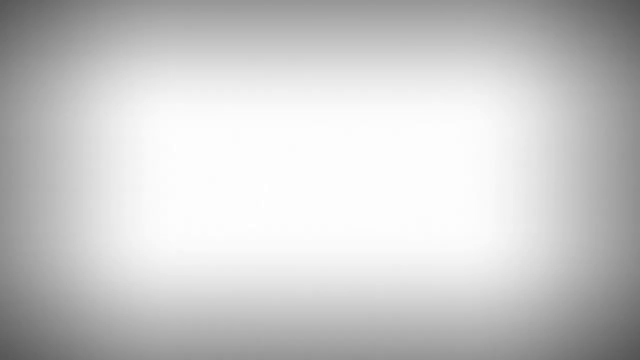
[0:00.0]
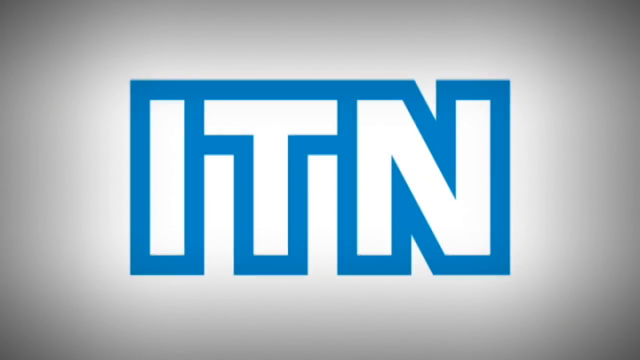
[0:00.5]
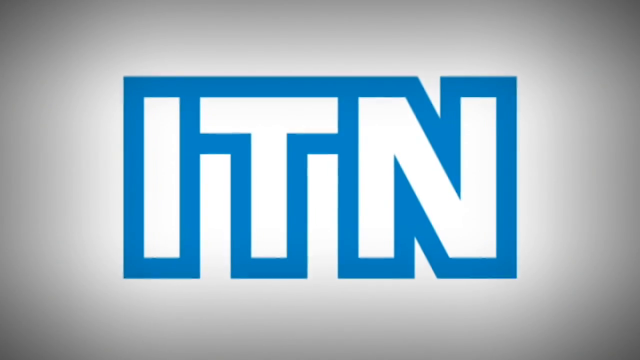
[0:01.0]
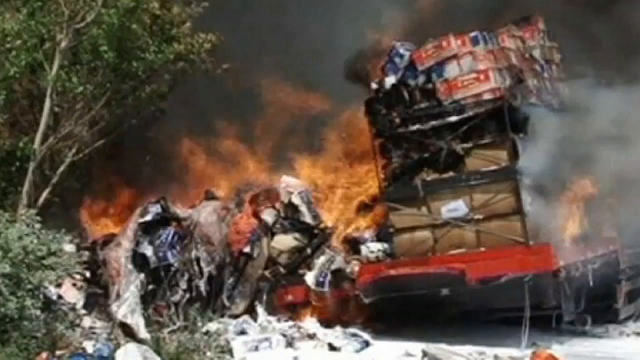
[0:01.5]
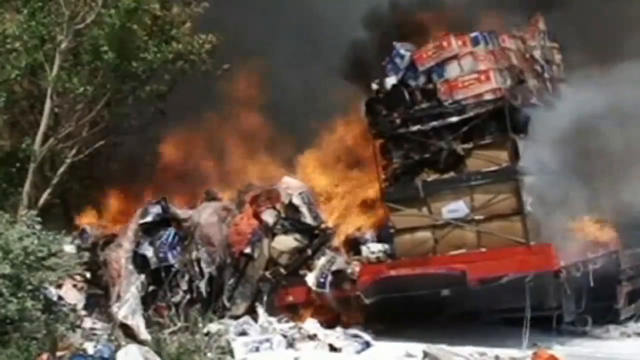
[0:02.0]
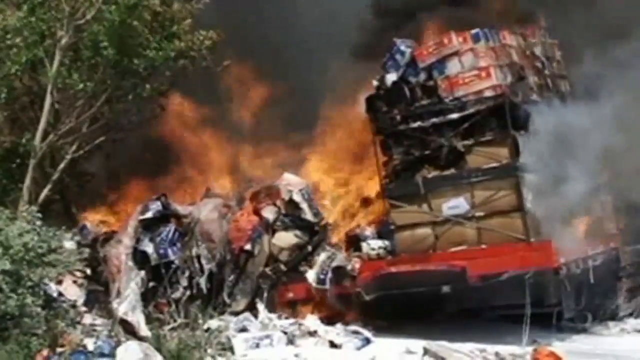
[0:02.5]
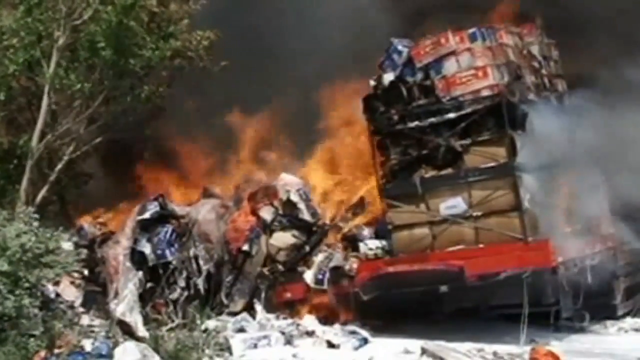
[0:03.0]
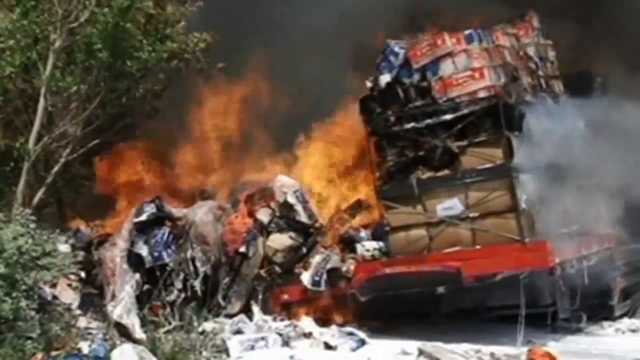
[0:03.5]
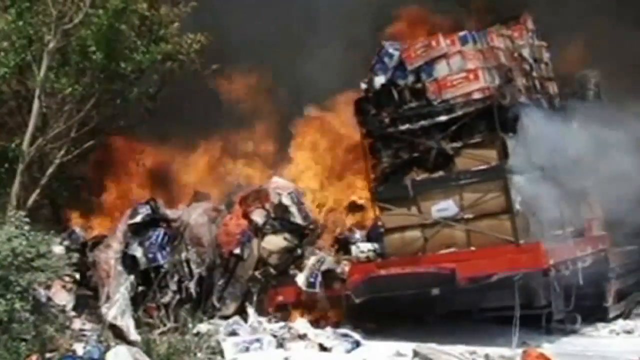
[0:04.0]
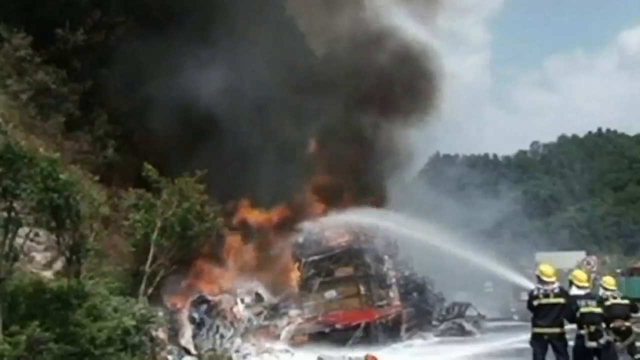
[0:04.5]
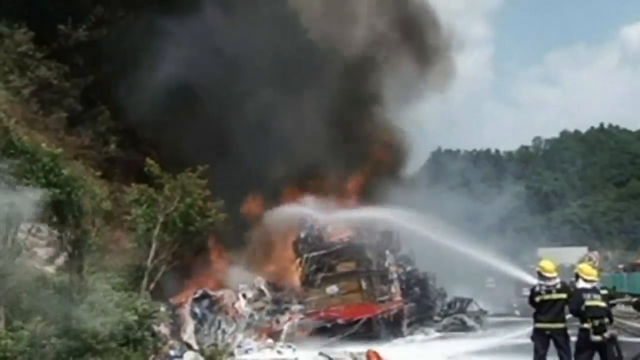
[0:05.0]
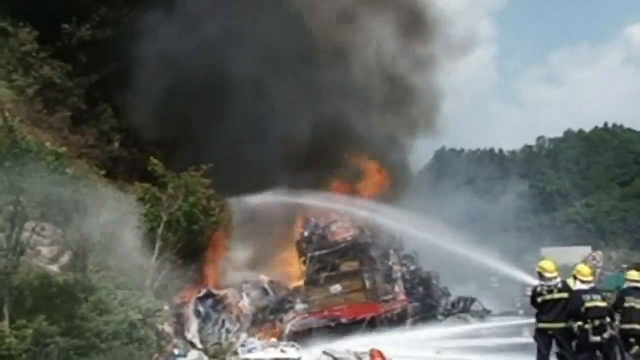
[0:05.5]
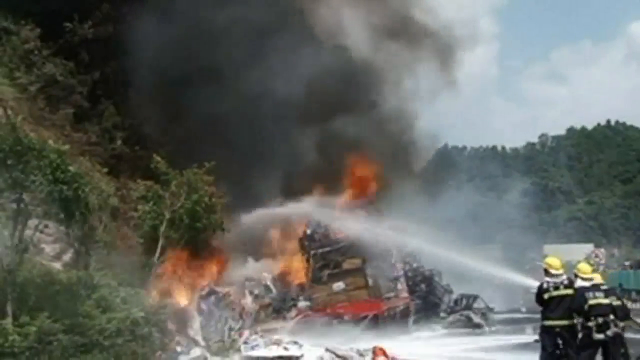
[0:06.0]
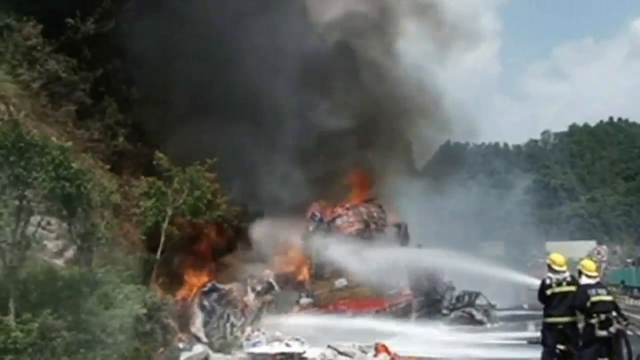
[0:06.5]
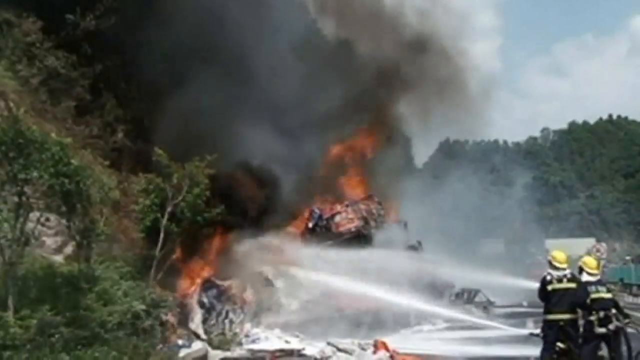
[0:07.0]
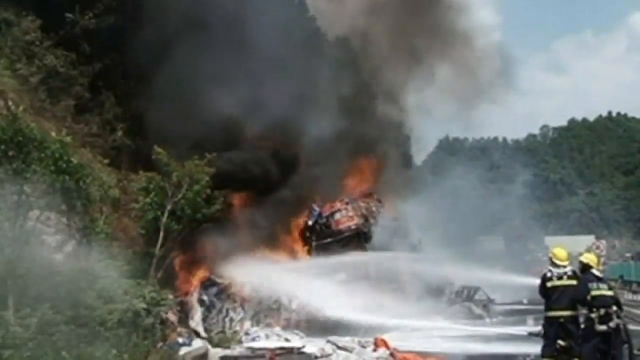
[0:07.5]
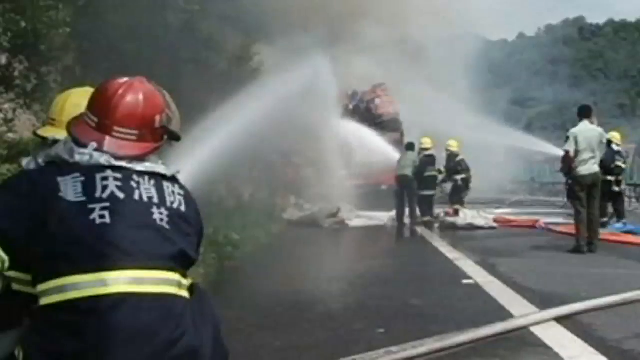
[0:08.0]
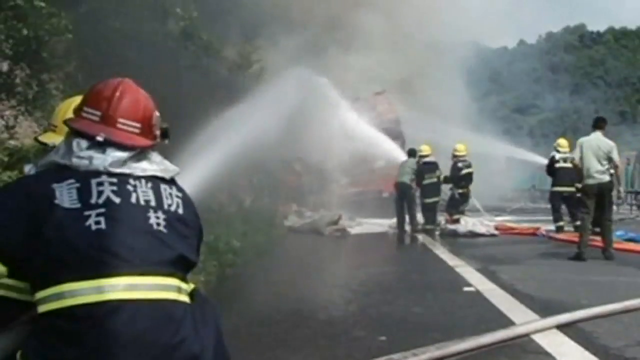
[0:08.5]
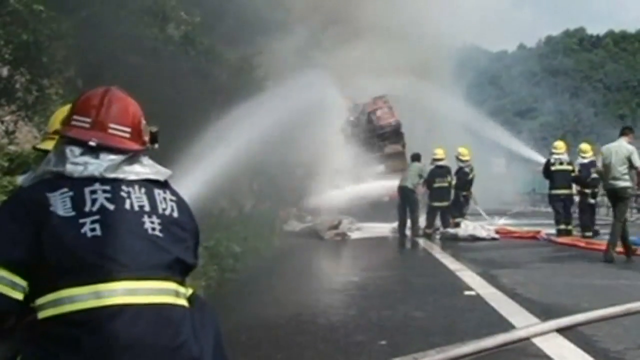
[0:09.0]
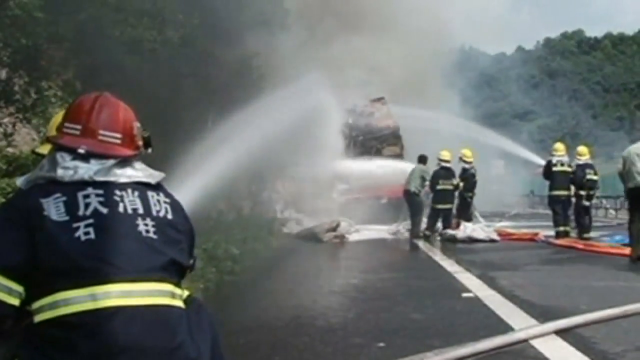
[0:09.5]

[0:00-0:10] The video opens on a white screen as the ITN logo comes onto the center of the screen; it is a blue outlined logo with the lettering set very close together. The scene switches to footage of a fire on what looks like some sort of truck on the side of the road, with a lot of trees around. It cuts to a farther angle where firemen spray a hose on top of the fire. Multiple angles show the hoses coming in to spray it, and there is a lot of dark smoke. Another shot no longer shows flames but a lot of smoke, with three different hoses and a bunch of people spraying at it on the side of the road.